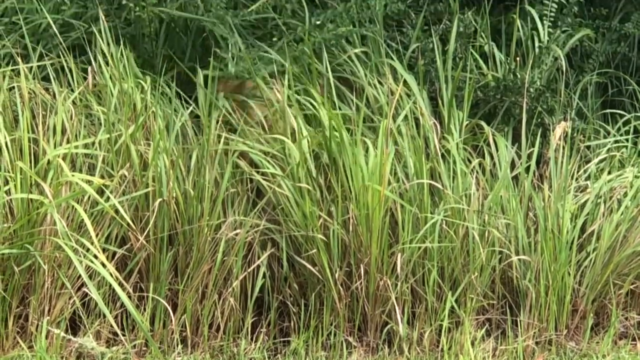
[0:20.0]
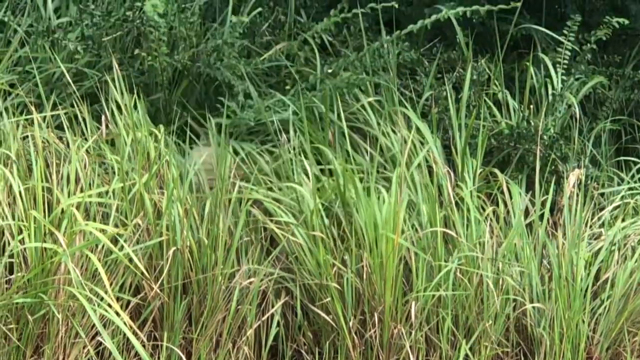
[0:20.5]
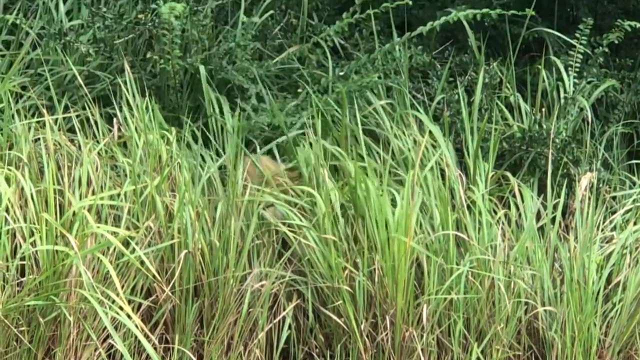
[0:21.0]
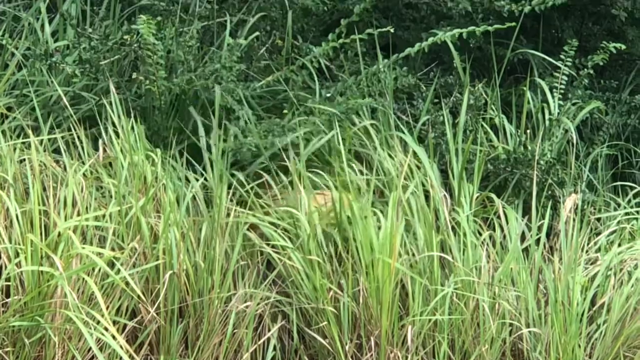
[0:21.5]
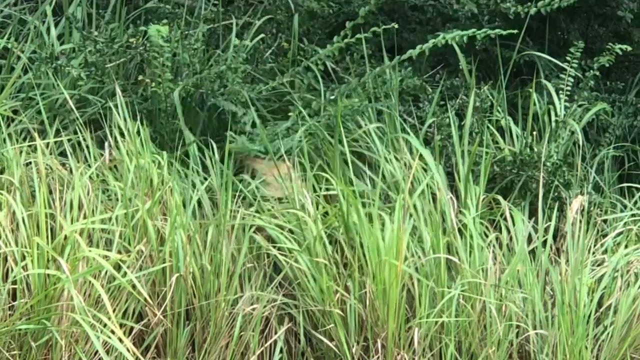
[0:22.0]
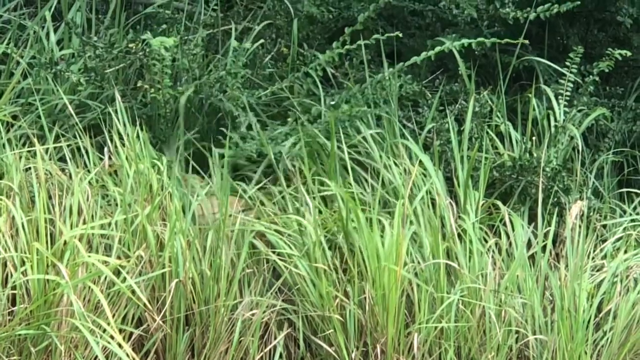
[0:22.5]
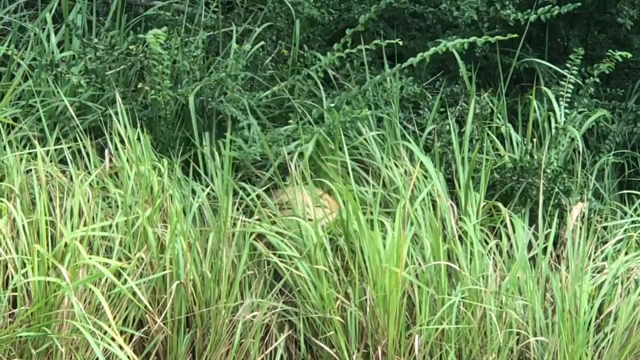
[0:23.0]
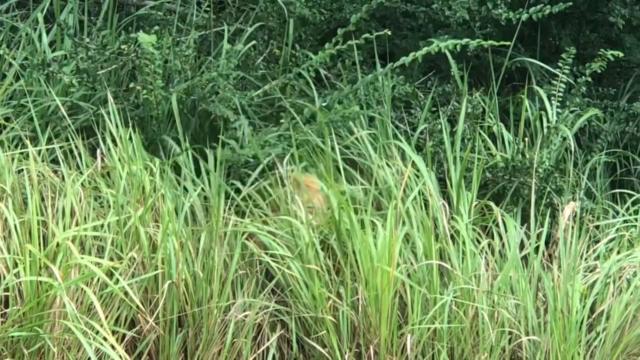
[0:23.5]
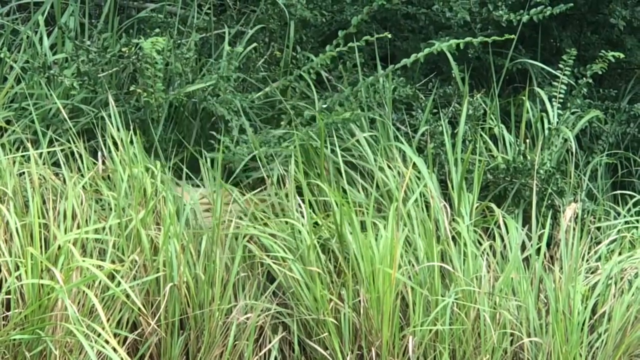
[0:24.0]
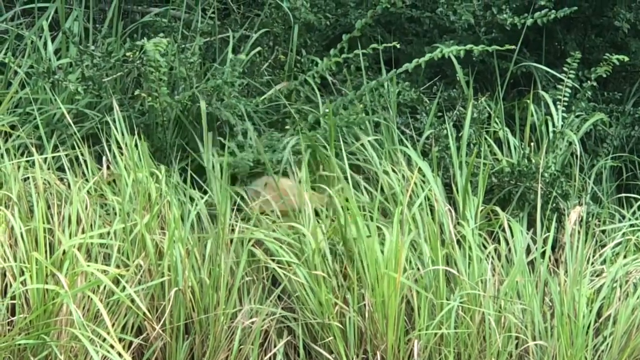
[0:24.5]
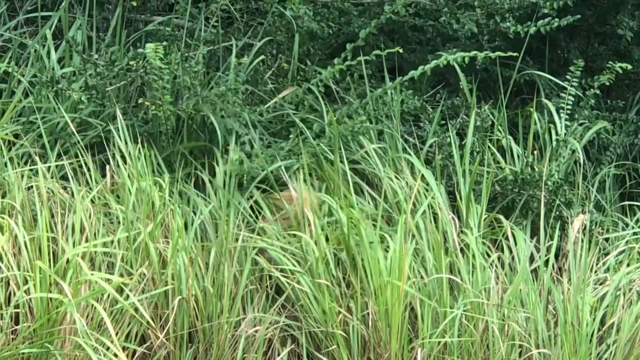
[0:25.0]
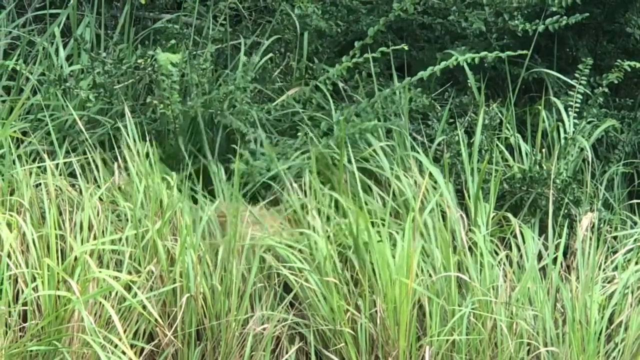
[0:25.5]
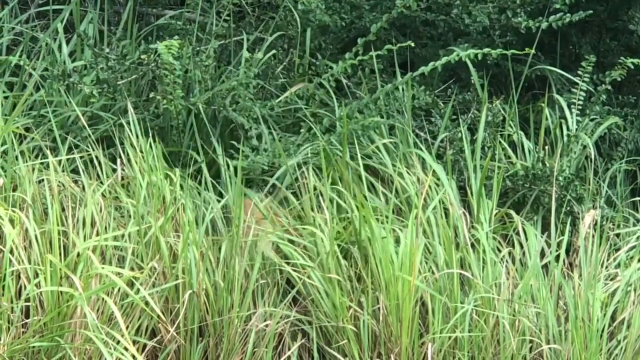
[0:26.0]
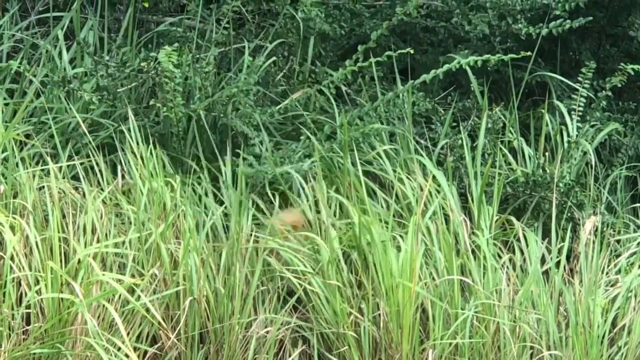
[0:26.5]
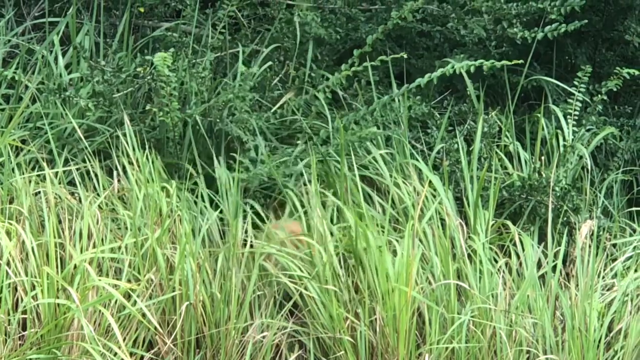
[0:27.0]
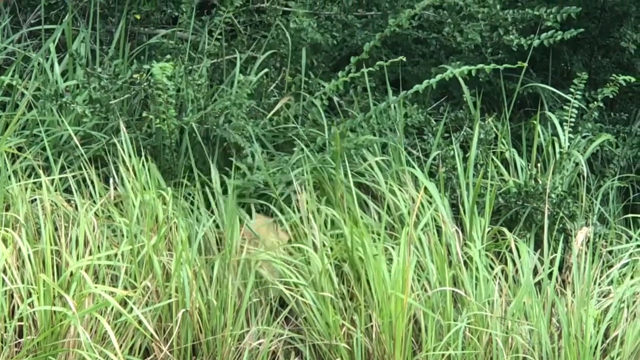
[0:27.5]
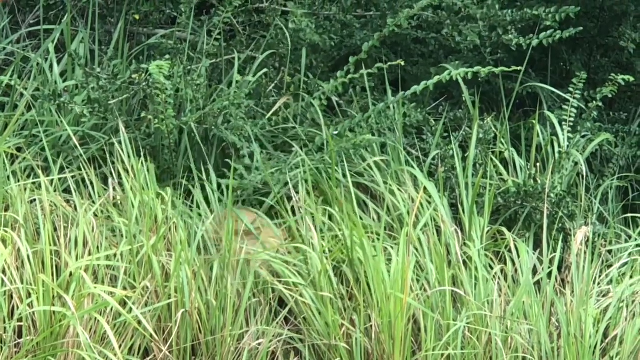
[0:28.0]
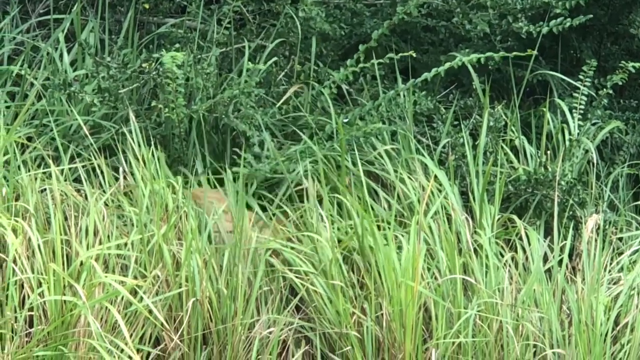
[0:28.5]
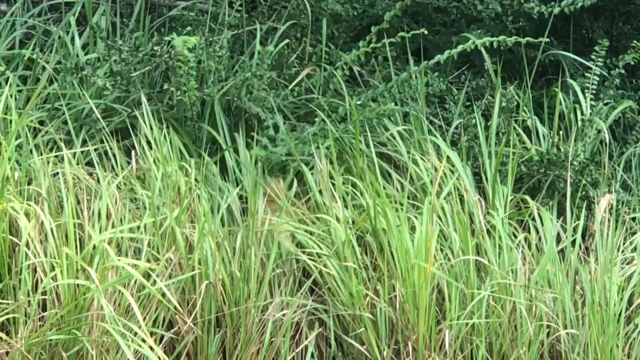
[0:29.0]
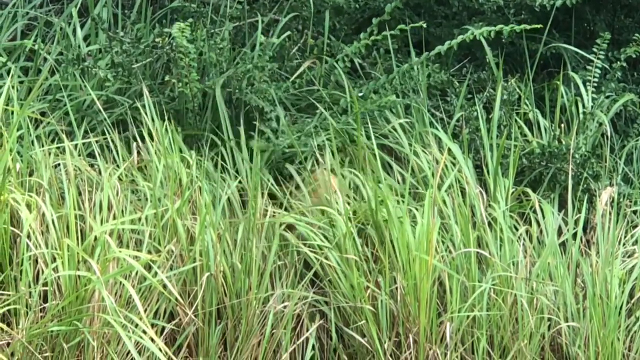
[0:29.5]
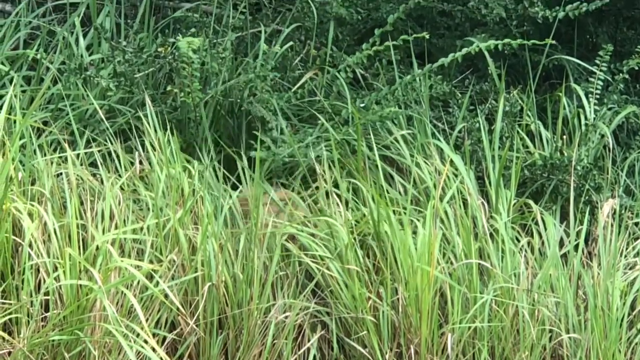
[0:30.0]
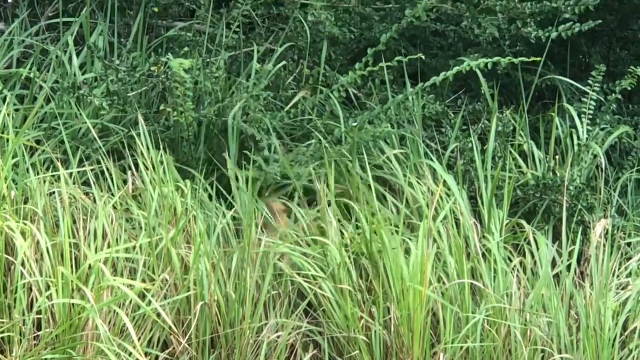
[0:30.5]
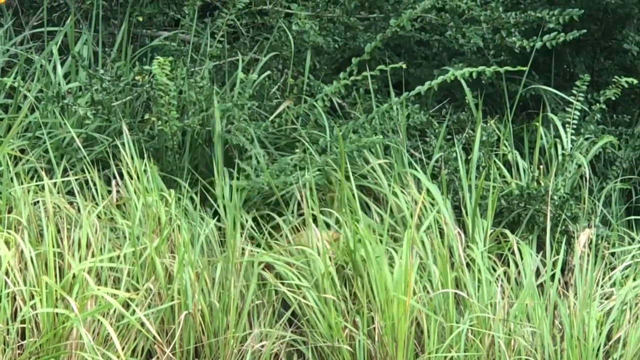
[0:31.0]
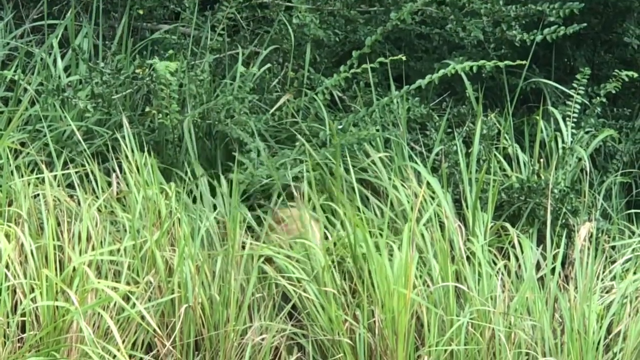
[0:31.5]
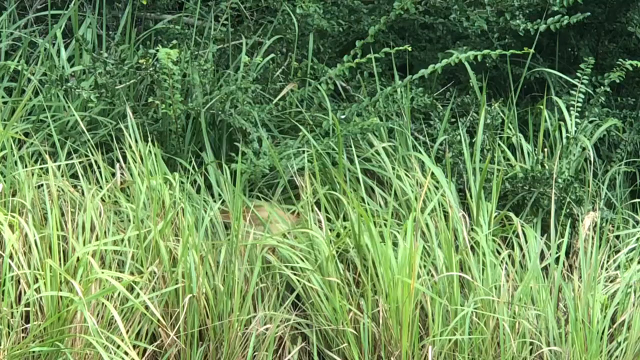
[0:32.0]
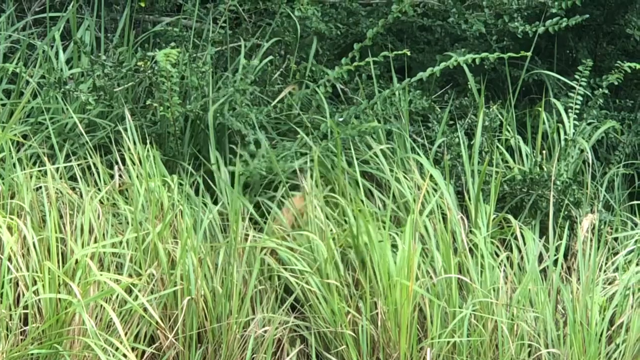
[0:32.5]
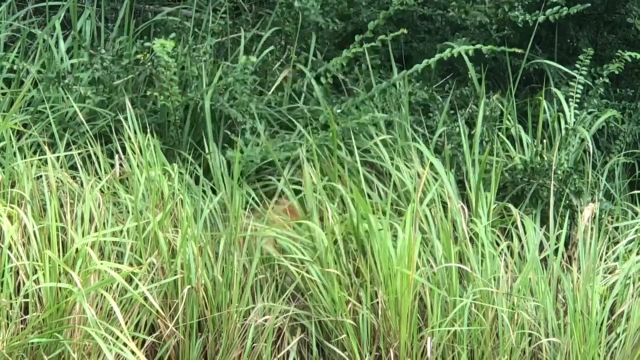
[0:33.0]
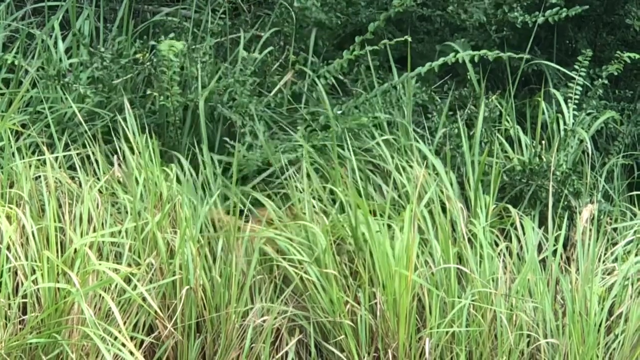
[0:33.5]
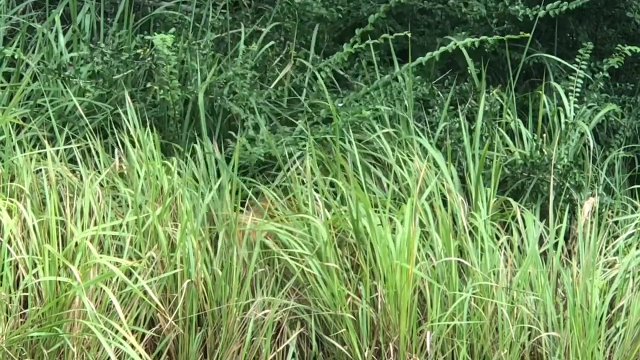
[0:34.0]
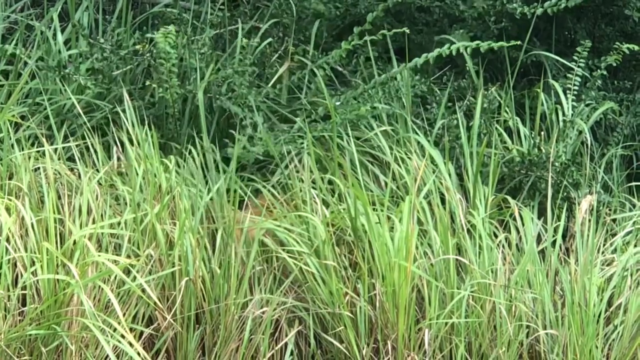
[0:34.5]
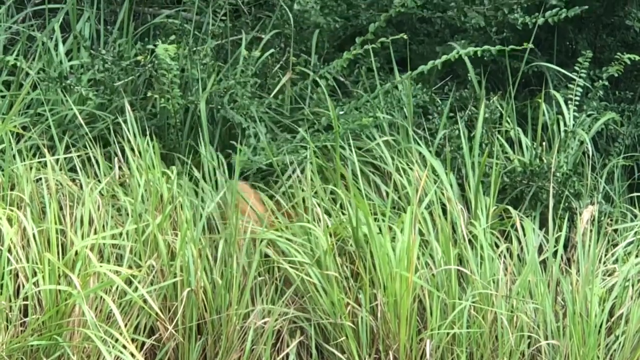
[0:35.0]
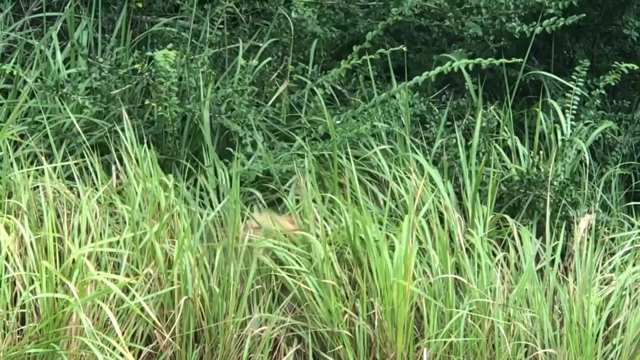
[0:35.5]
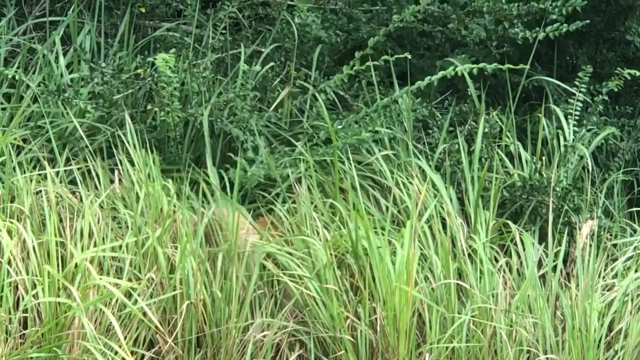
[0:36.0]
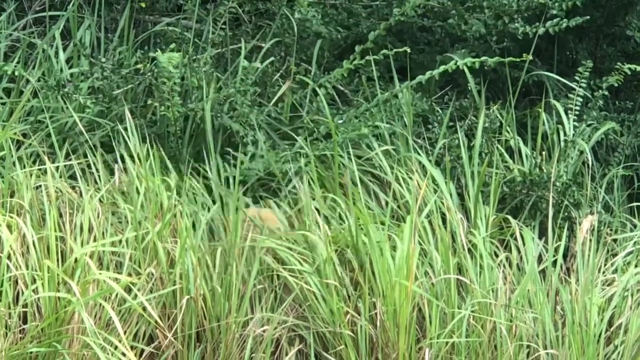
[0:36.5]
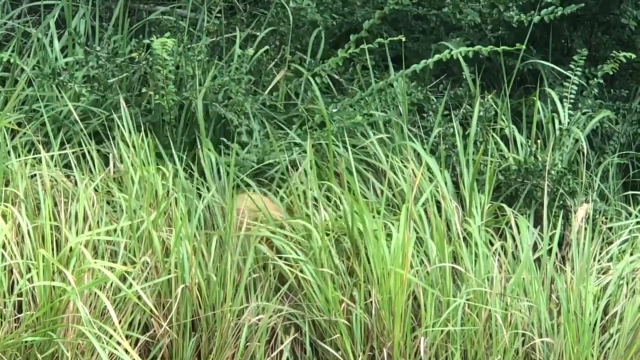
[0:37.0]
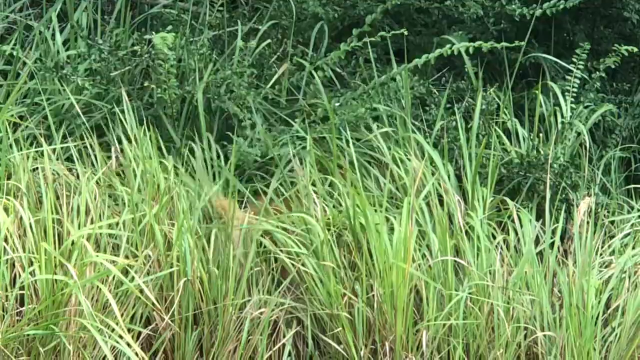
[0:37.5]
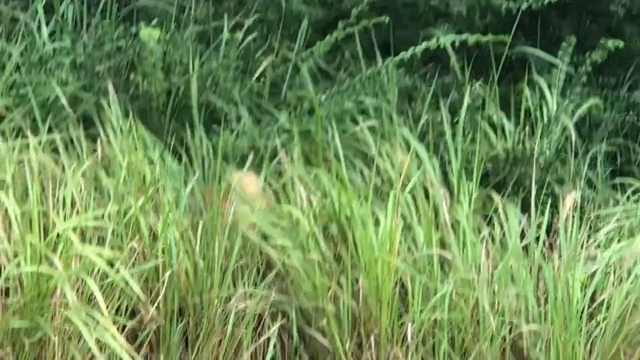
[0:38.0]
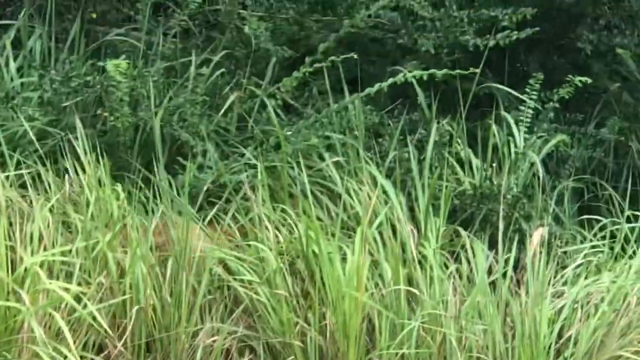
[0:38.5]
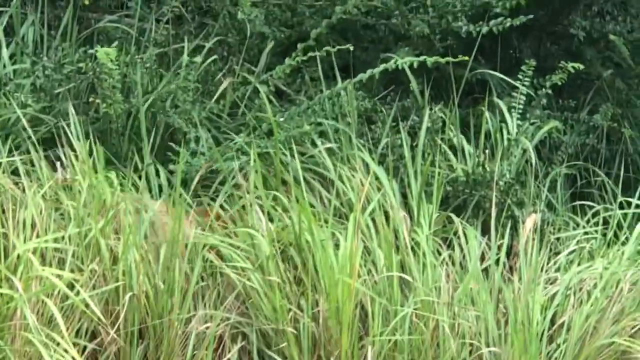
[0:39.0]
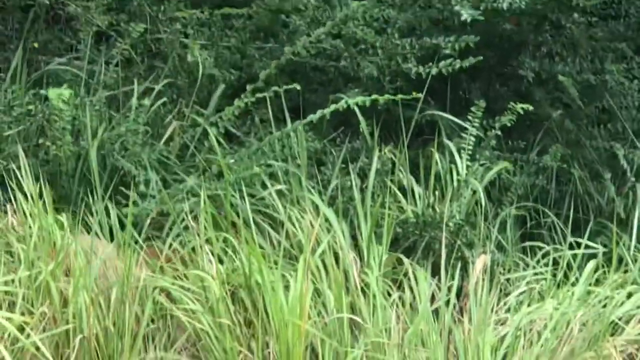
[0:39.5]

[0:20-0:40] The animal's tail keeps moving from left to right behind the long grasses, which are approximately three-quarters of a meter tall, shaking all the plants around it. The day is illuminated and clear. The camera stays focused on the moving animal.